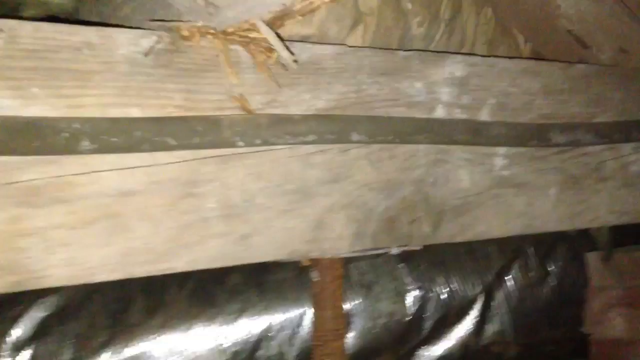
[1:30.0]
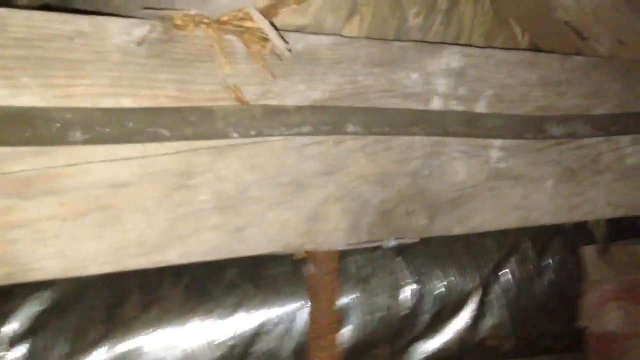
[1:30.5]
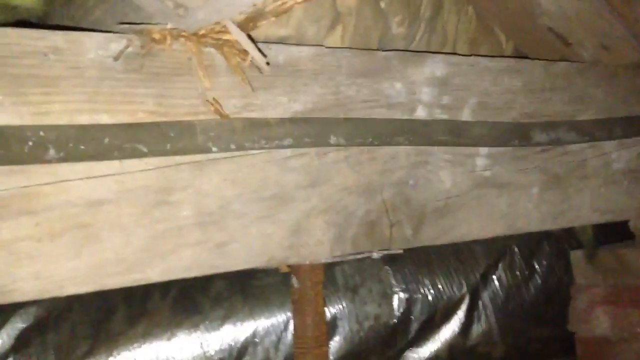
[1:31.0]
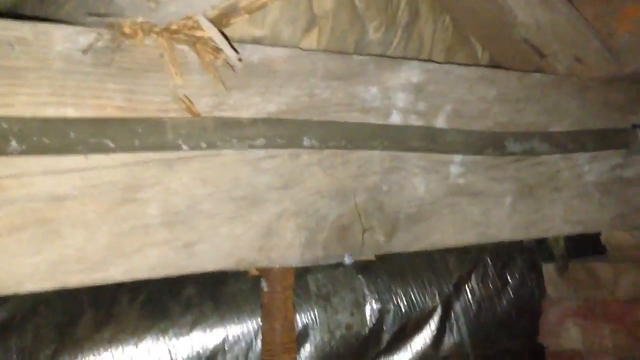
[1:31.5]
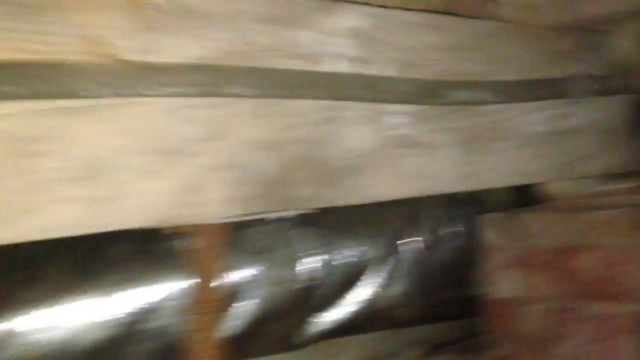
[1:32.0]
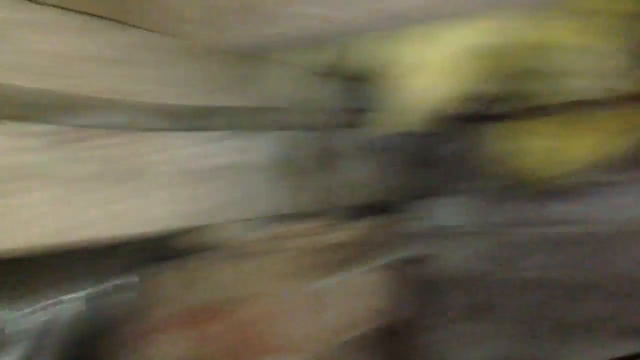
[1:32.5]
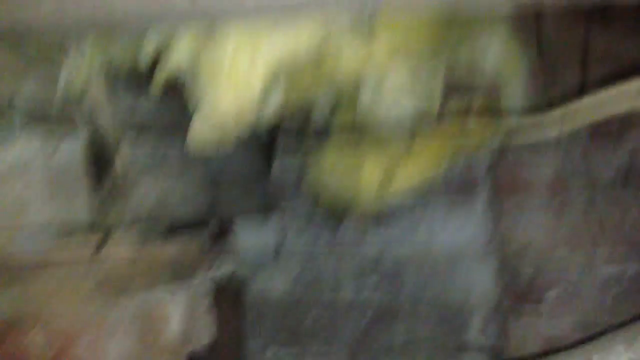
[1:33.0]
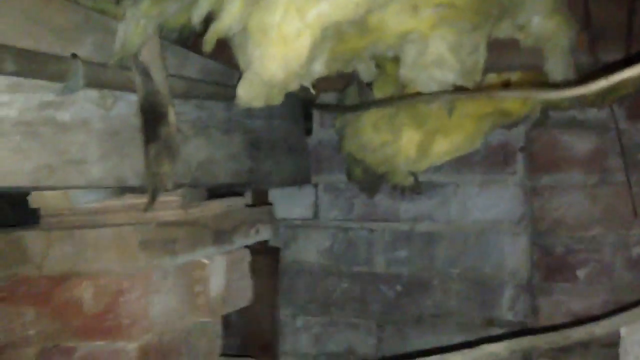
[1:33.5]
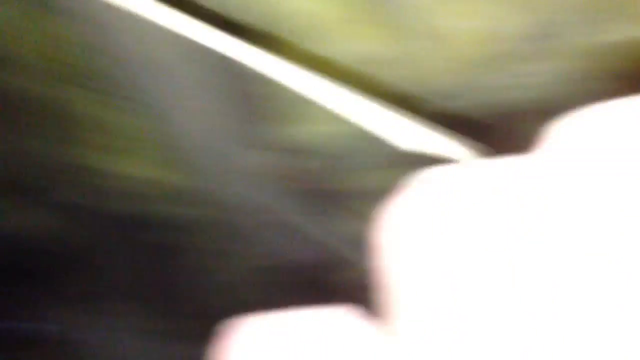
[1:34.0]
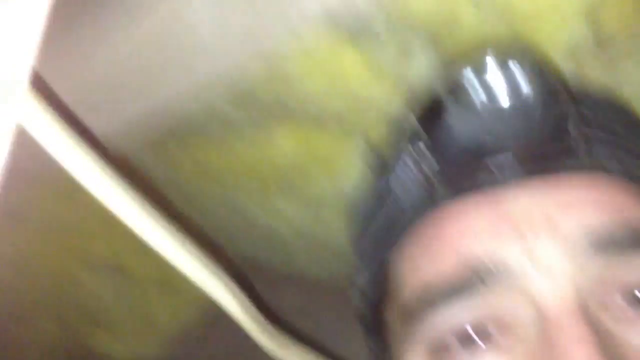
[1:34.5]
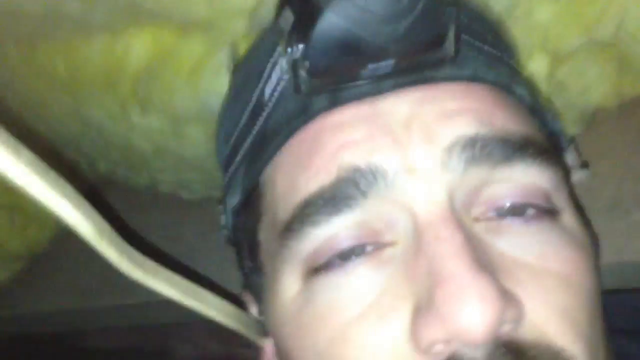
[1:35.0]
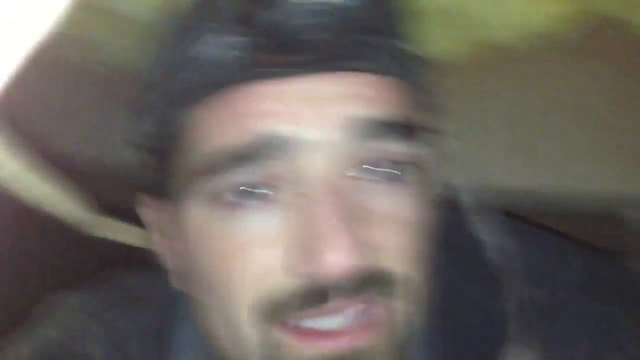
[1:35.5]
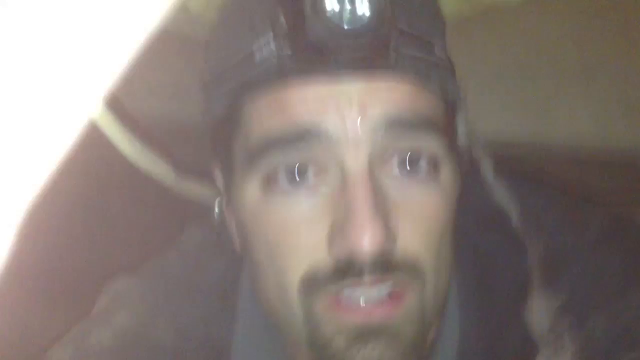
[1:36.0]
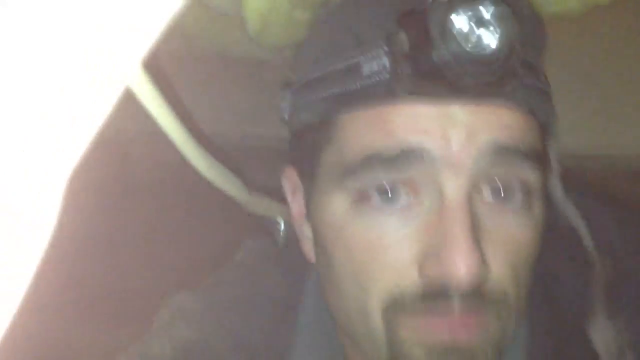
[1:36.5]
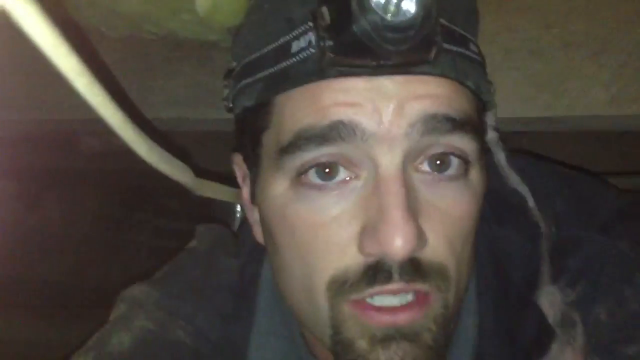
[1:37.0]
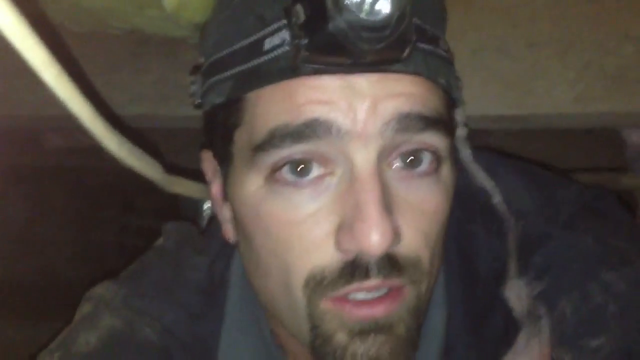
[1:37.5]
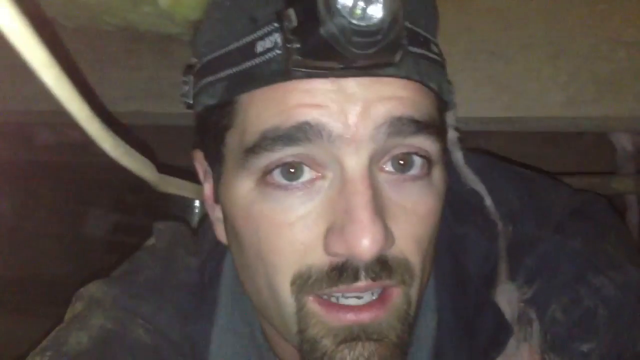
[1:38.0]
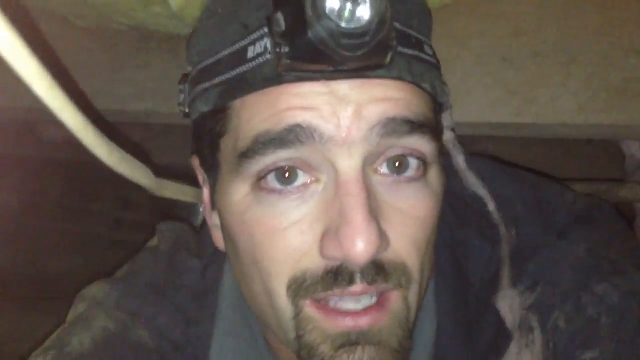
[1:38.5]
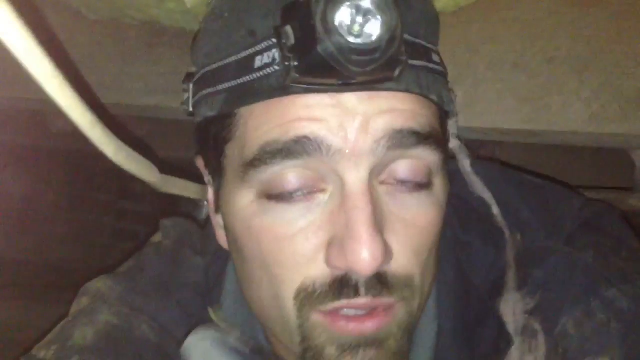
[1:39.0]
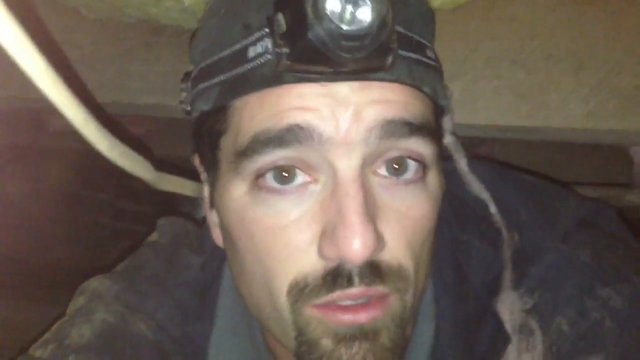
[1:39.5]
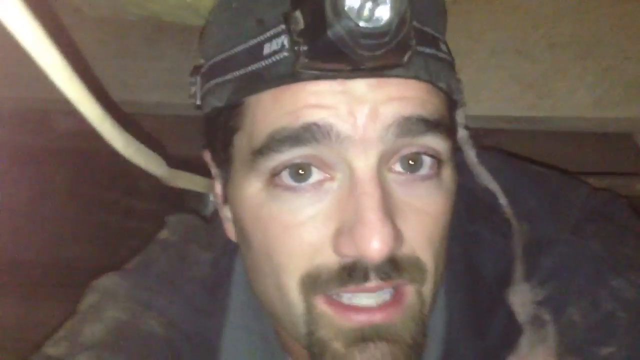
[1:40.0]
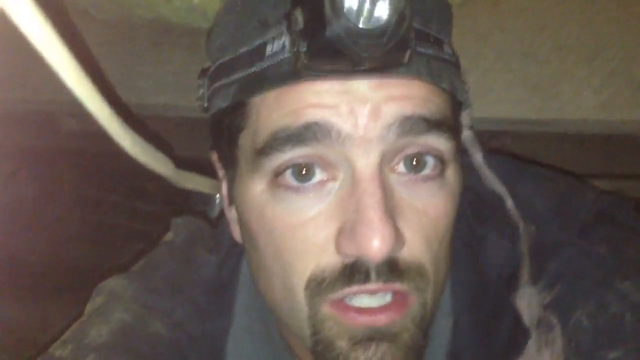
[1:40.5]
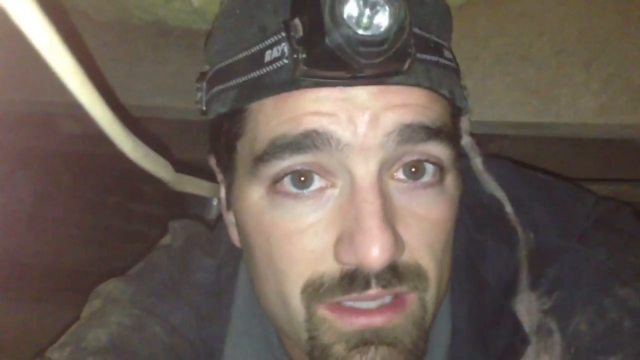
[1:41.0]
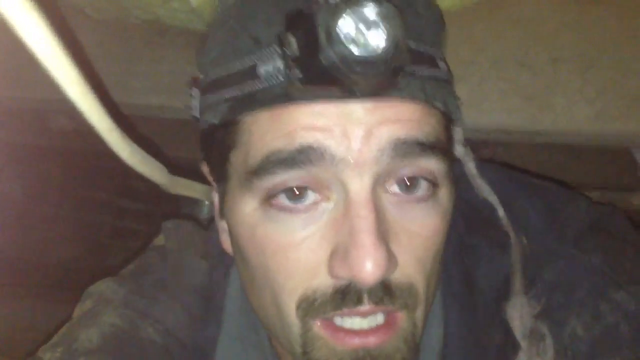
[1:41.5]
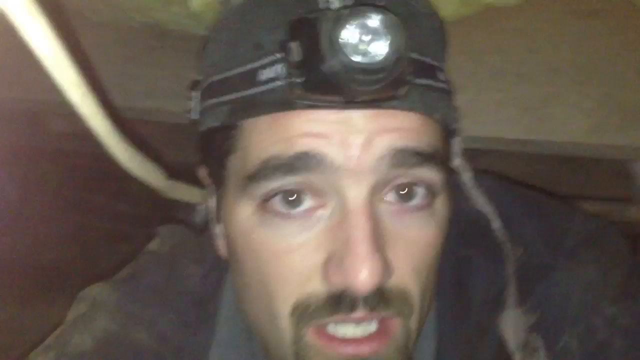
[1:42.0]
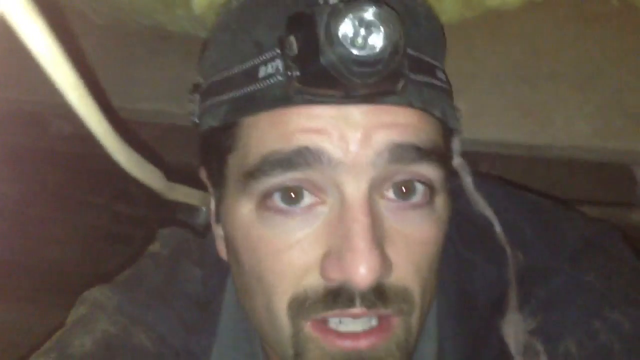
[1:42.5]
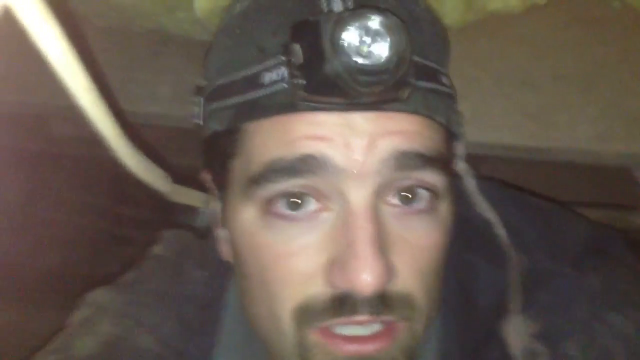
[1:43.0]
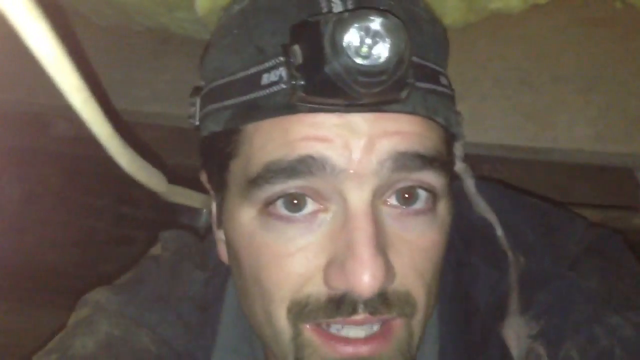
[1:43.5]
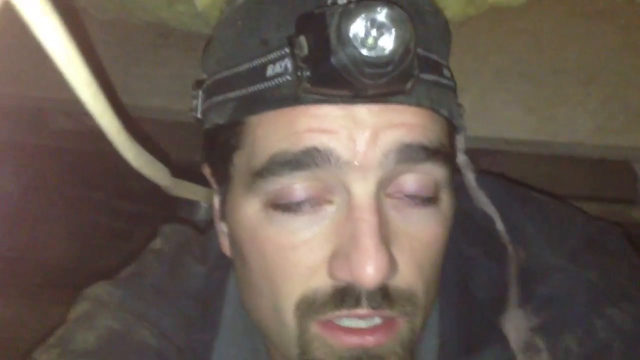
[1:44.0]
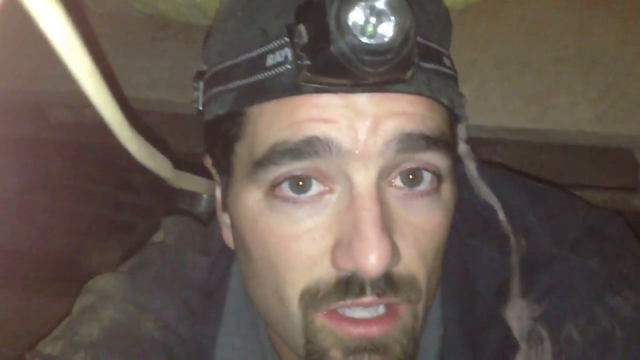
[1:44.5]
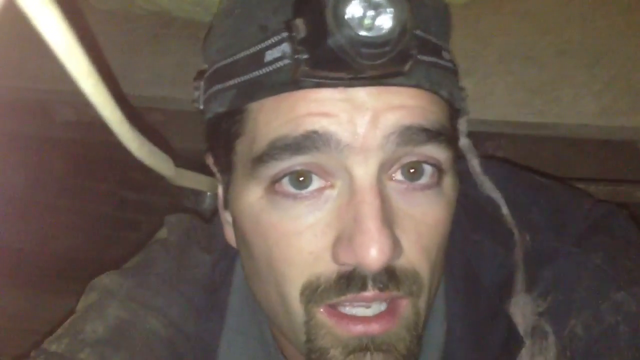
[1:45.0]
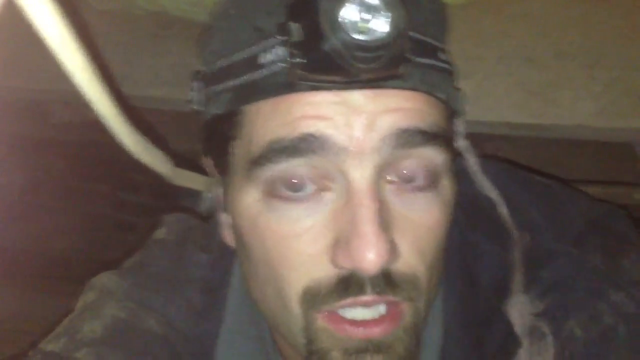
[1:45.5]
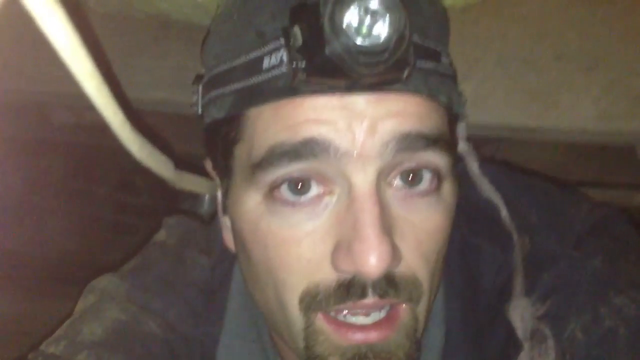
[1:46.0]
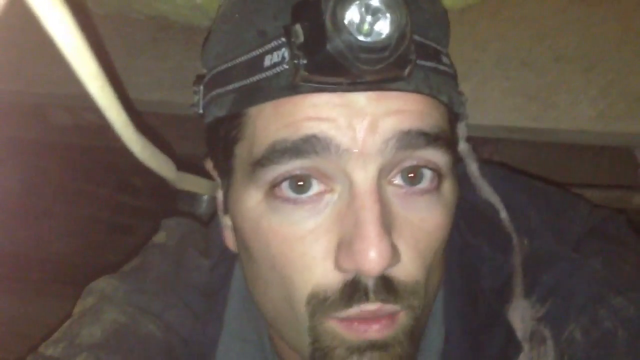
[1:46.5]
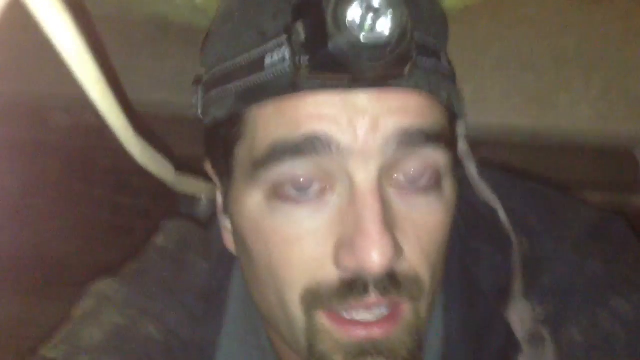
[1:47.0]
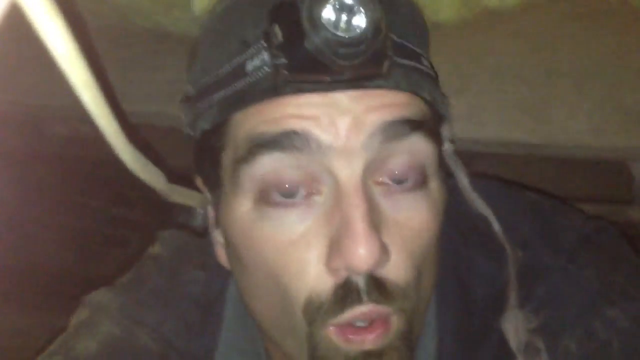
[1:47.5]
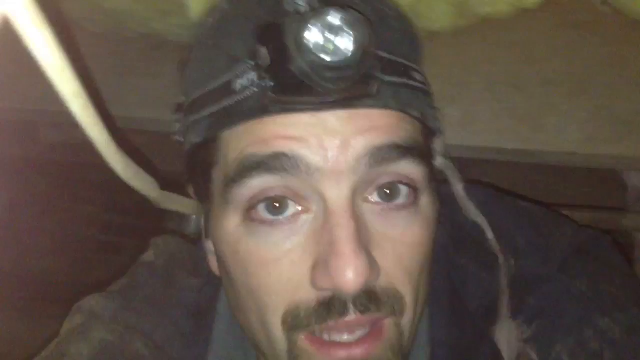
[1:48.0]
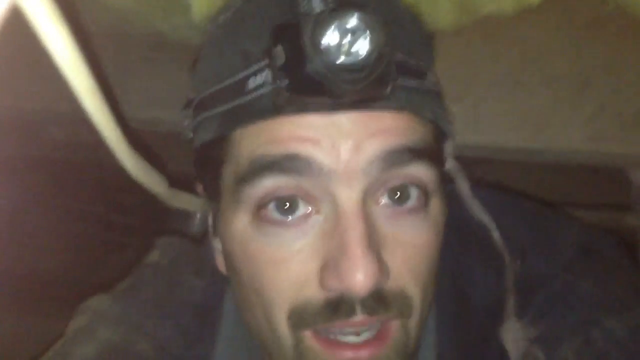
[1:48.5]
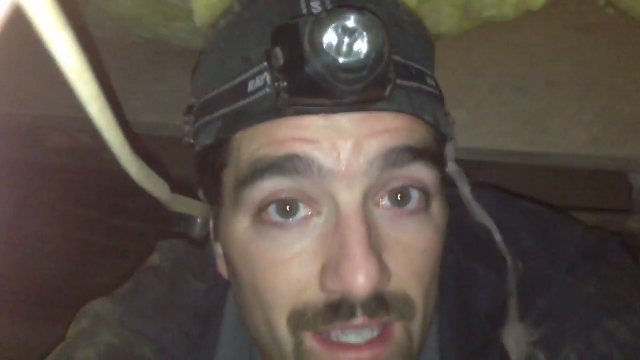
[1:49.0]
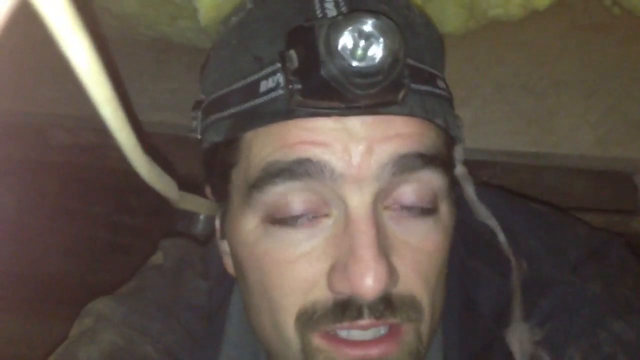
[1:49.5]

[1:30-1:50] The camera is still on the two pieces of wood going across, with the little piece on top toward the left side chipped up where he has been using the crowbar, and the jack still underneath in the center. The camera moves slightly right, then fast to the right to the back wall, which is concrete with asbestos hanging from the roof and a cord coming down and going over to the right. He pans the camera around fast onto his face. Above his head is asbestos. He wears a black boggin with a light strapped around the top of his head. The camera shakes and moves everywhere. On the left side there is a light, with a cord going down and around behind his head. He has bushy eyebrows, a goatee and brown eyes. The camera is down at his chin as he talks. He moves the light off the screen, and as he talks a blue jacket is visible. It looks like he might be under a porch, as it is really cramped. He talks to the camera again, and a little piece of something comes up from the bottom. A little steam and dirt move up just in front of him; where he is talking, it kicks up the dust.